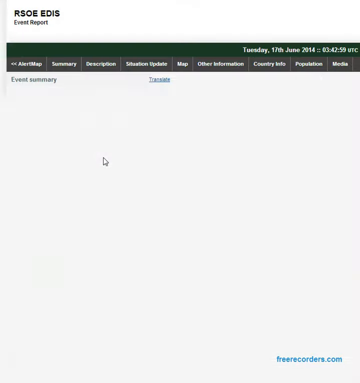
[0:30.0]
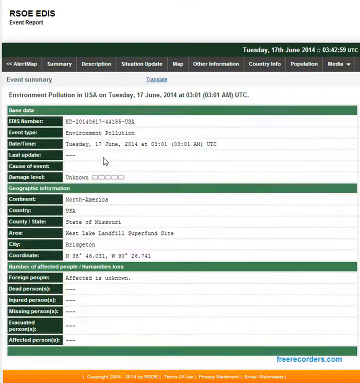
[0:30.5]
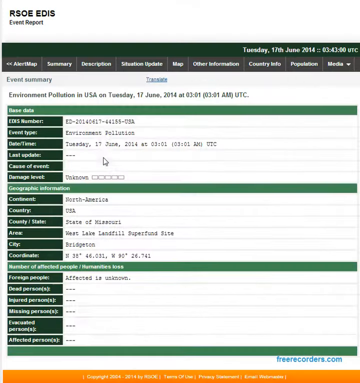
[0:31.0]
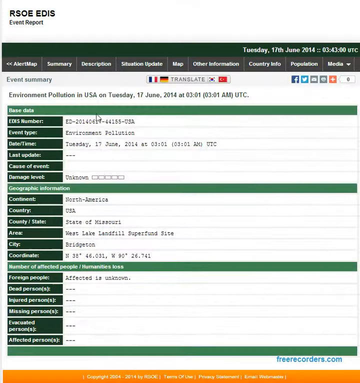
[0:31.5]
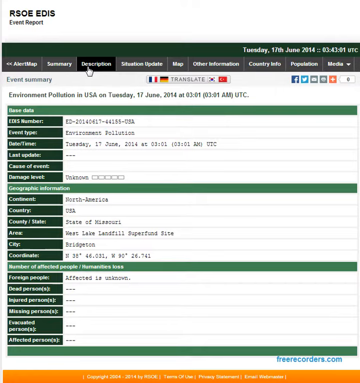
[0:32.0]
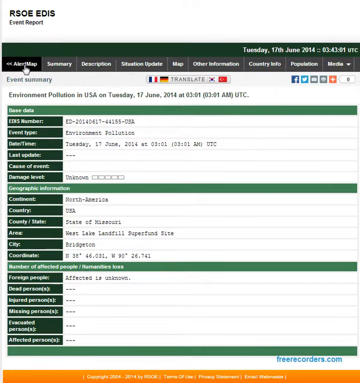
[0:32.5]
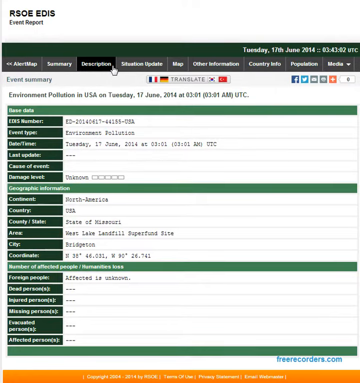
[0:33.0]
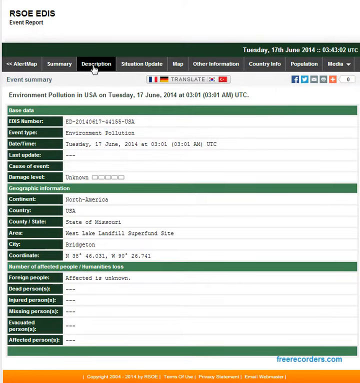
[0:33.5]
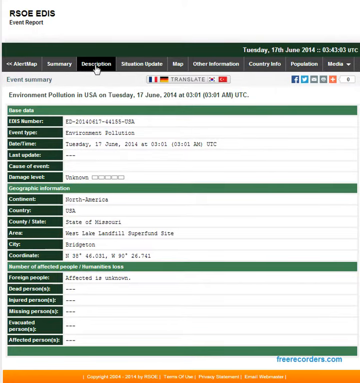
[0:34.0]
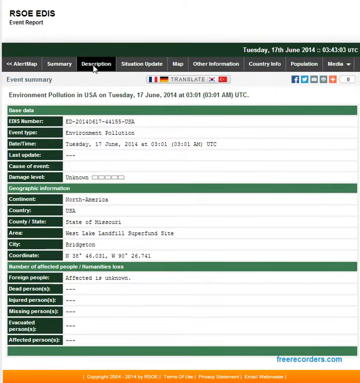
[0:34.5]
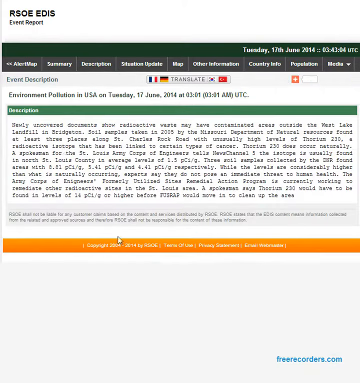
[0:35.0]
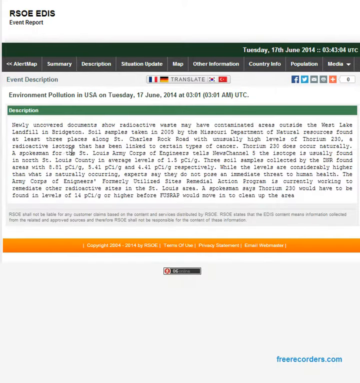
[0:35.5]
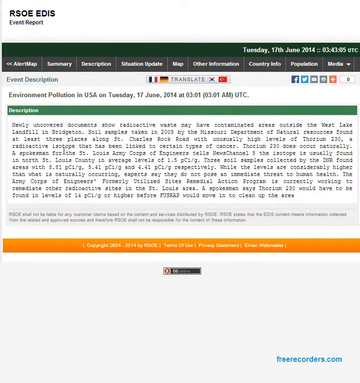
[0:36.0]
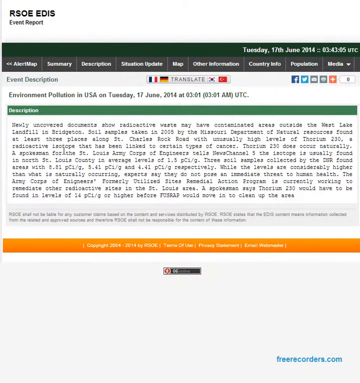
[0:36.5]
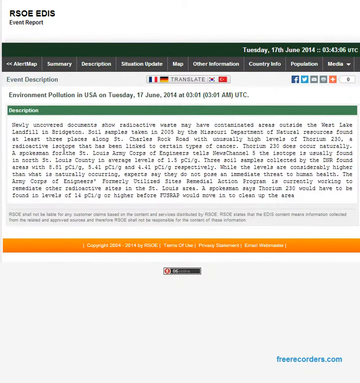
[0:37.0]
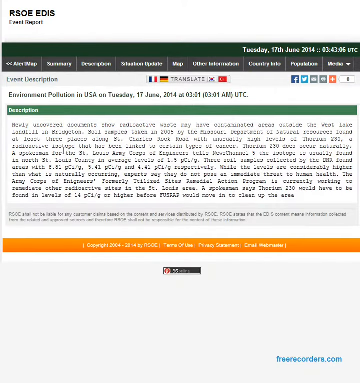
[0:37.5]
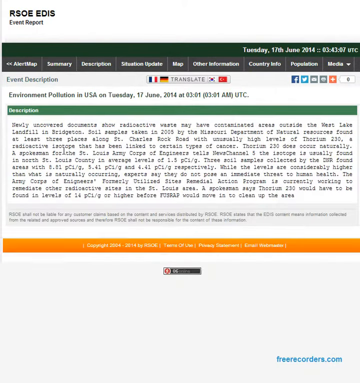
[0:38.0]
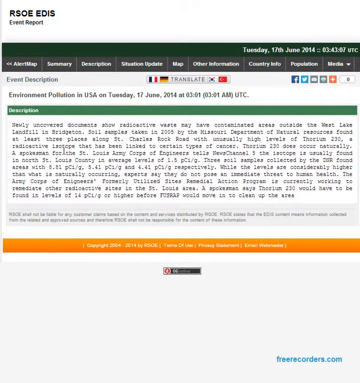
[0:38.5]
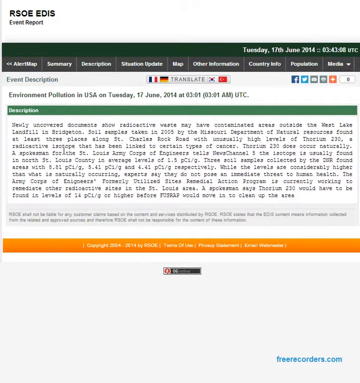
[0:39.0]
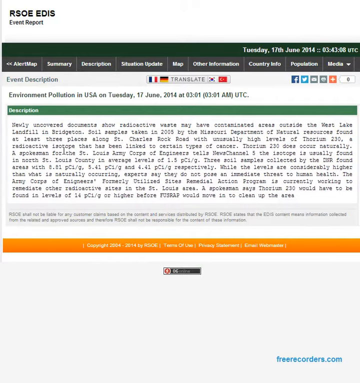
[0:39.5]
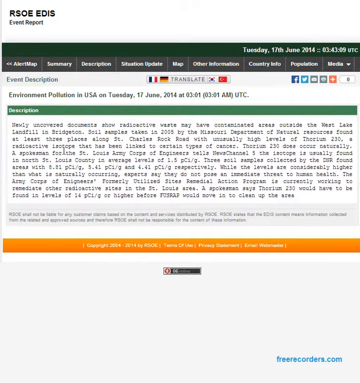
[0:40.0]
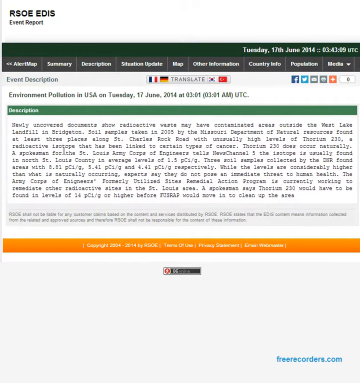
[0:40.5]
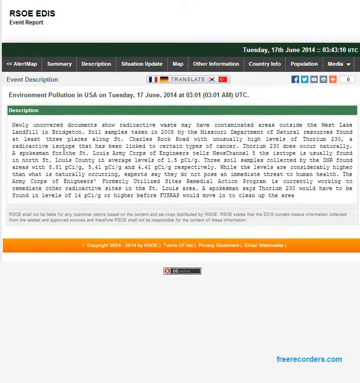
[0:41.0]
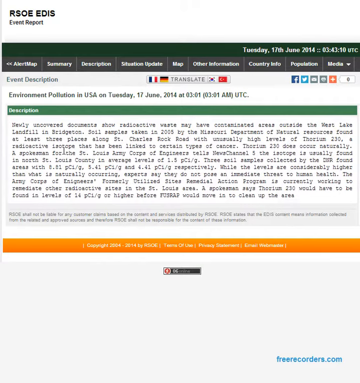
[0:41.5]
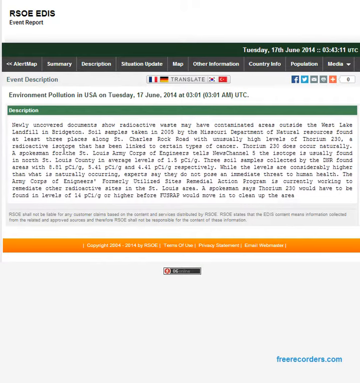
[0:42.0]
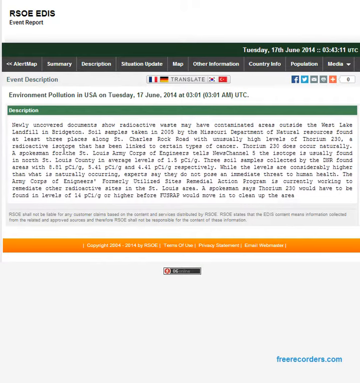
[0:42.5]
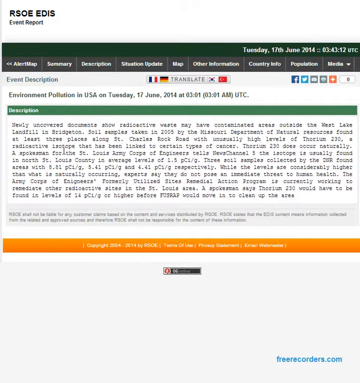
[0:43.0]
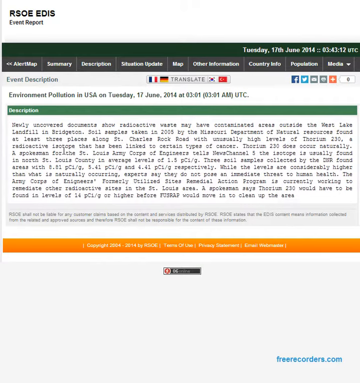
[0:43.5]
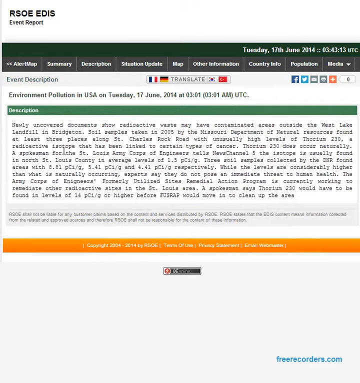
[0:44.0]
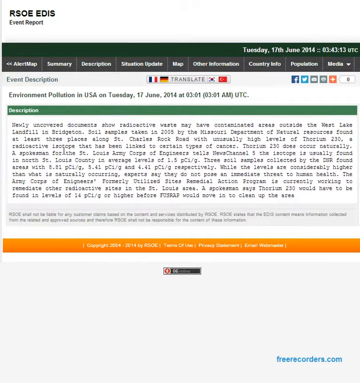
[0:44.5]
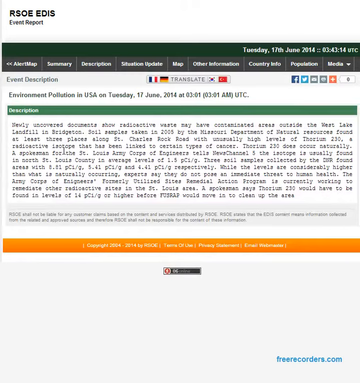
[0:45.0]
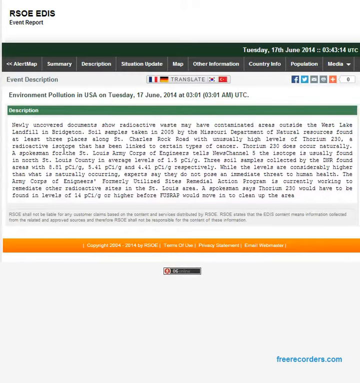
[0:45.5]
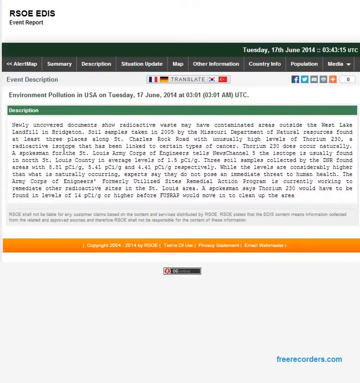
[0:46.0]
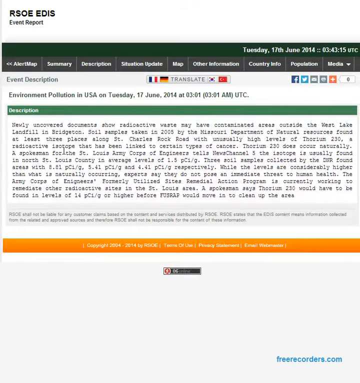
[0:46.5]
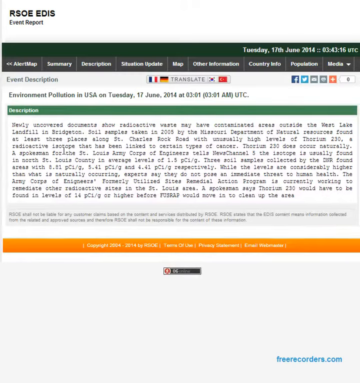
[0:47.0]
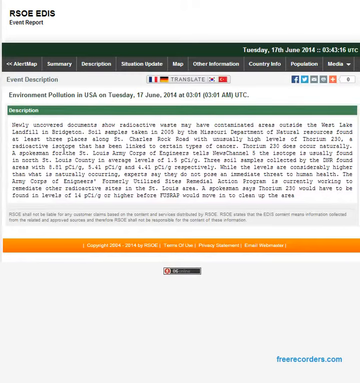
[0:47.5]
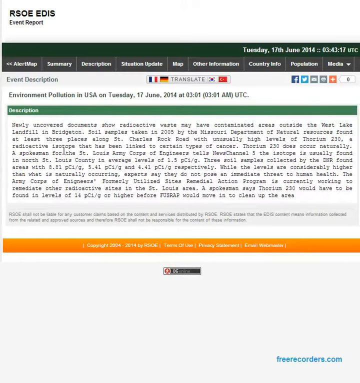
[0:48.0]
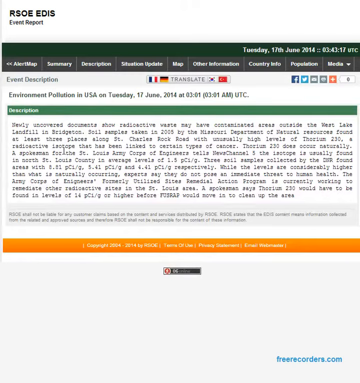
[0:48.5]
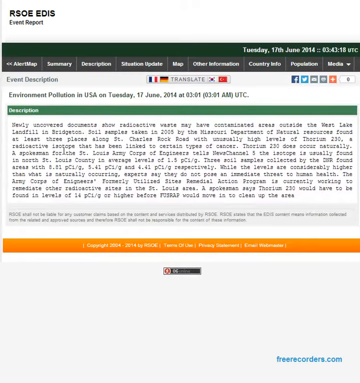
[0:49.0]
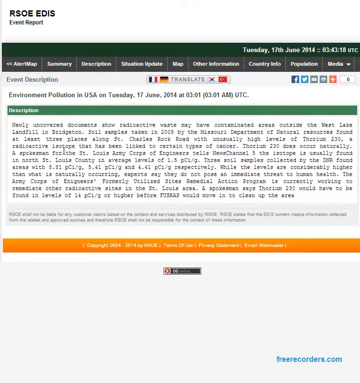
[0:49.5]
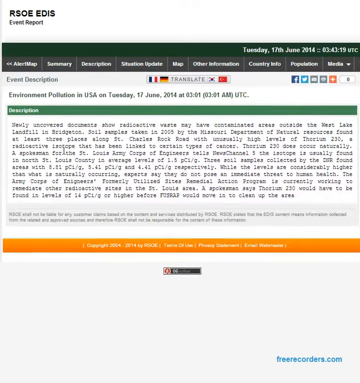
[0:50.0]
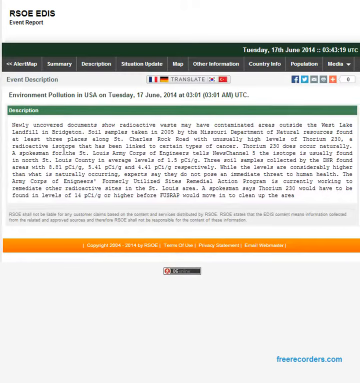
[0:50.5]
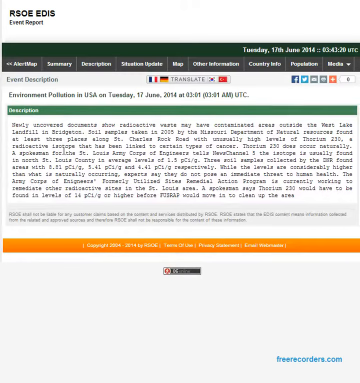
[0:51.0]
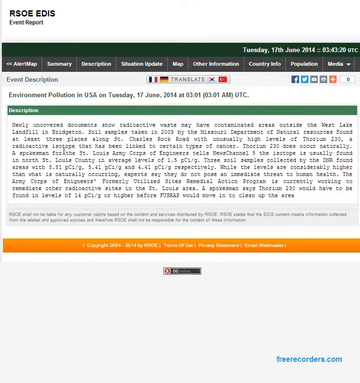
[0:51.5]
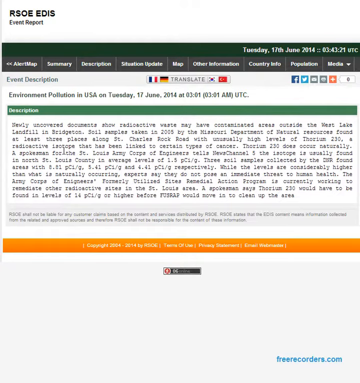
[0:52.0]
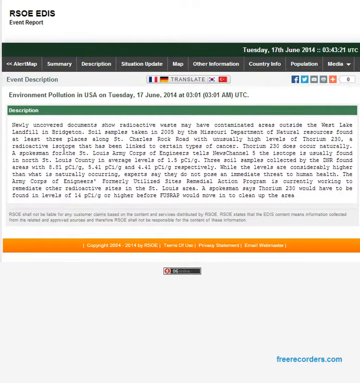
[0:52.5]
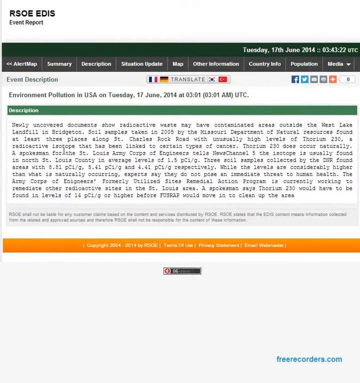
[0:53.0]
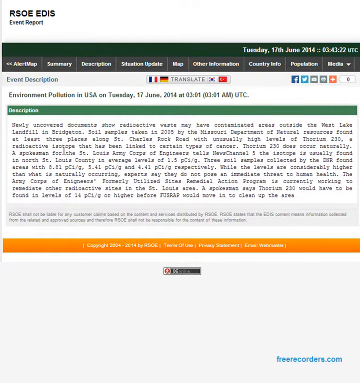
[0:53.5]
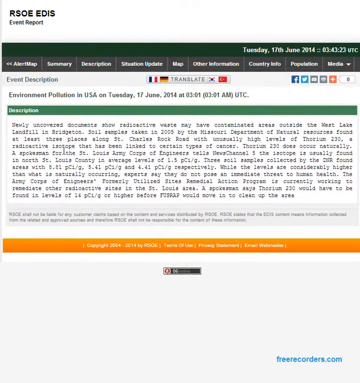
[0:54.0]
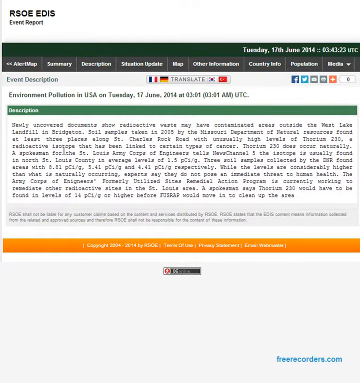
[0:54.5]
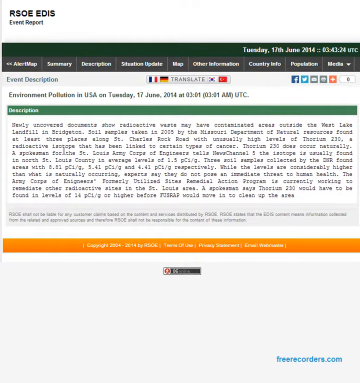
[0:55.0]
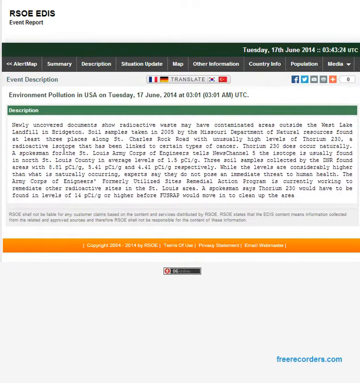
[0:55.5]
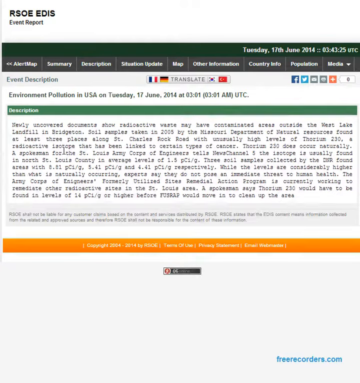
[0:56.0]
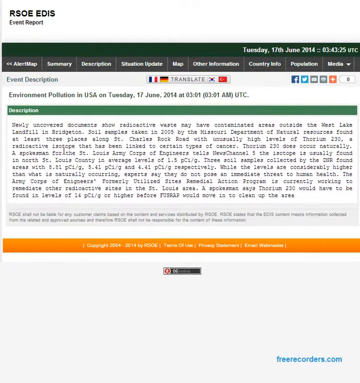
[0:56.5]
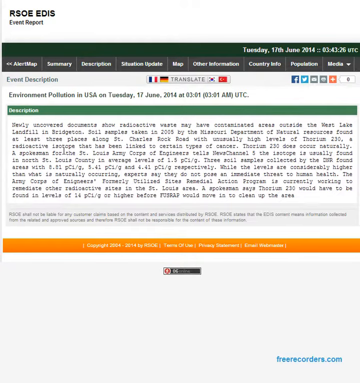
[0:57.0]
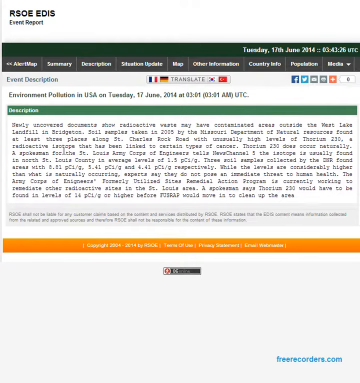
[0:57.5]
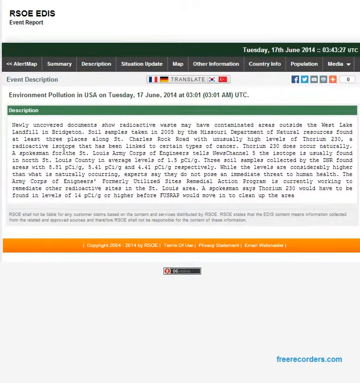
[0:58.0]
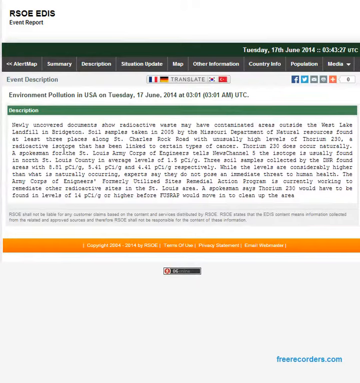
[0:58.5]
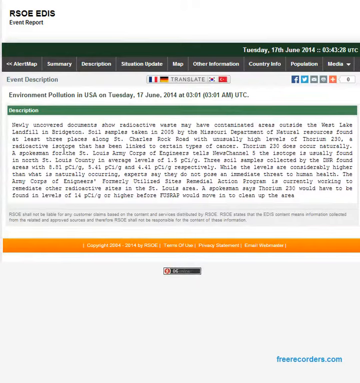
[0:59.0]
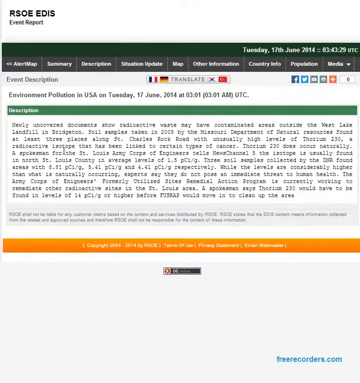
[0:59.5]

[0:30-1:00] A site called RSEOE Addis Event Report shows environment pollution in the US around Tuesday, 17th of June, 2014 at 3 AM UTC. The event is documented in detail, listing the area, the city, the country as the USA, the continent as North America, and the event type as environment pollution. A tab with the description is located at the top left, and there is a way back to the alert map. The description mentions newly uncovered documents and radioactive waste that may have accumulated in areas outside the West Lake landfill in Bridgetown, along with other text that cannot be read clearly because the video is in bad quality. There are orange rectangles at the bottom.